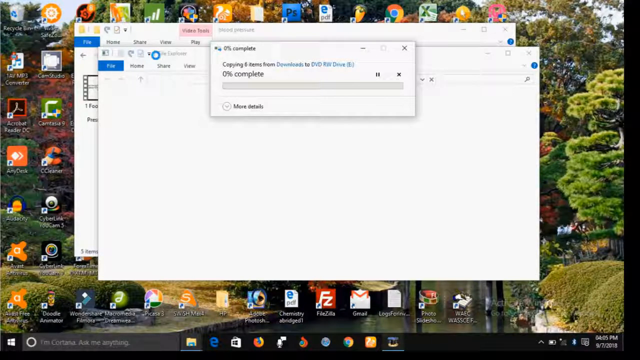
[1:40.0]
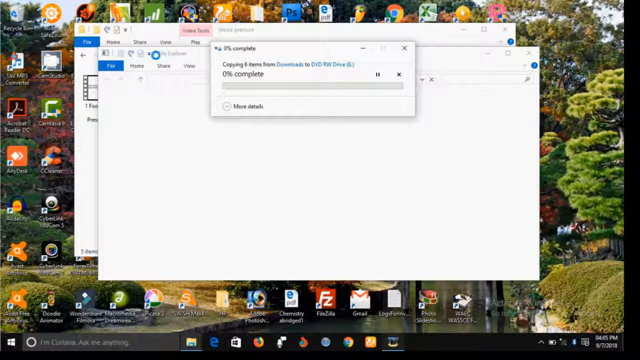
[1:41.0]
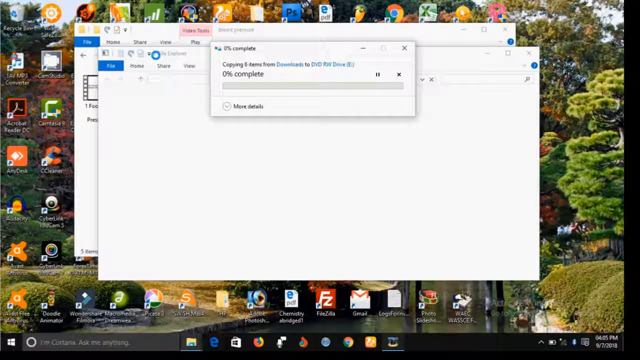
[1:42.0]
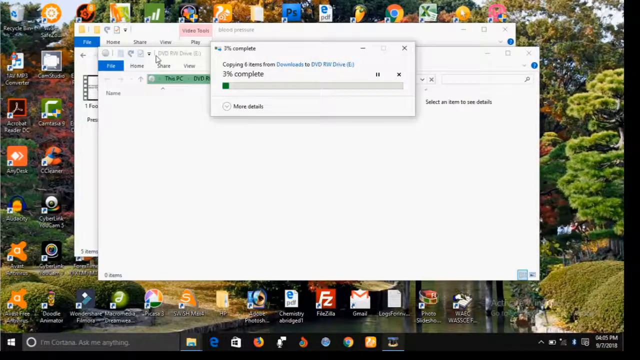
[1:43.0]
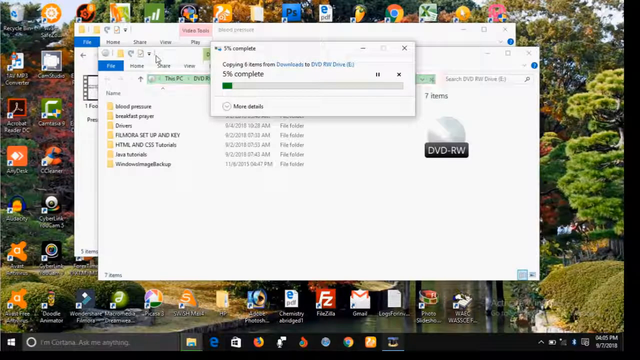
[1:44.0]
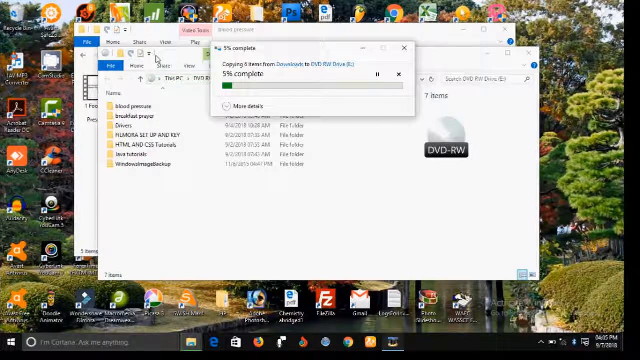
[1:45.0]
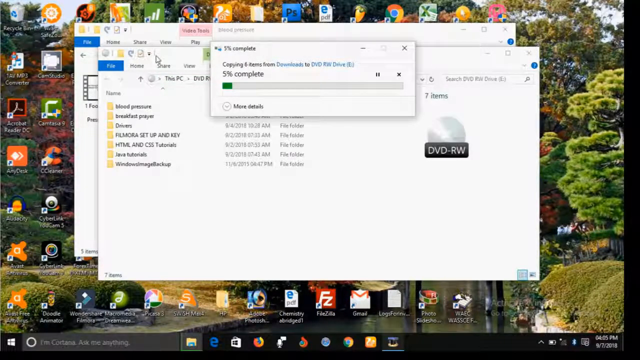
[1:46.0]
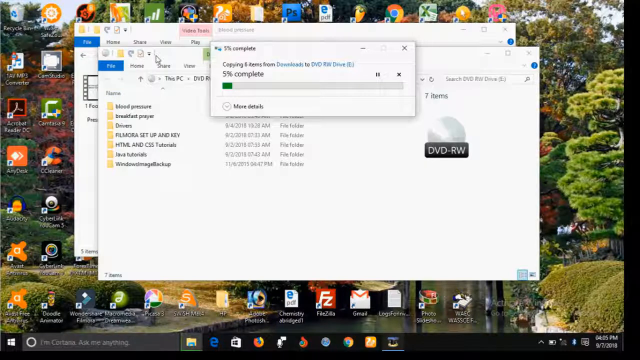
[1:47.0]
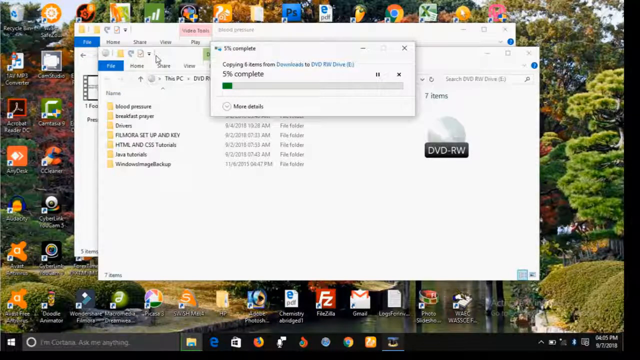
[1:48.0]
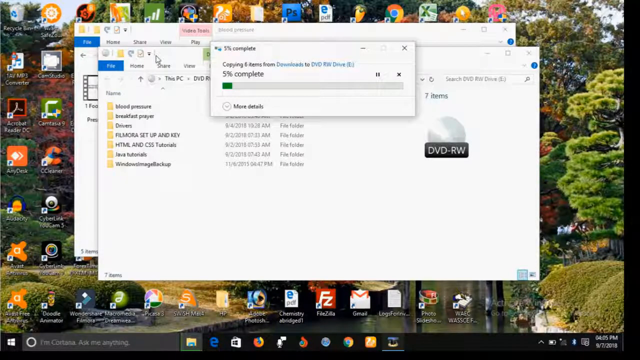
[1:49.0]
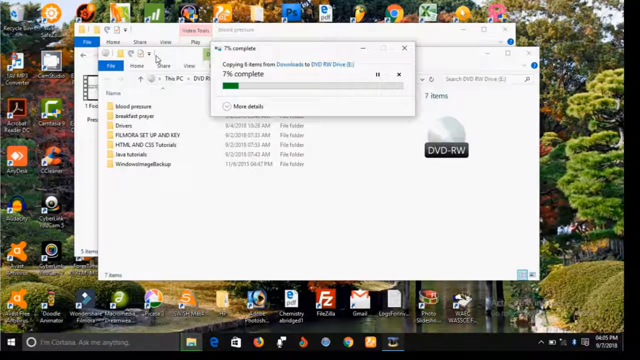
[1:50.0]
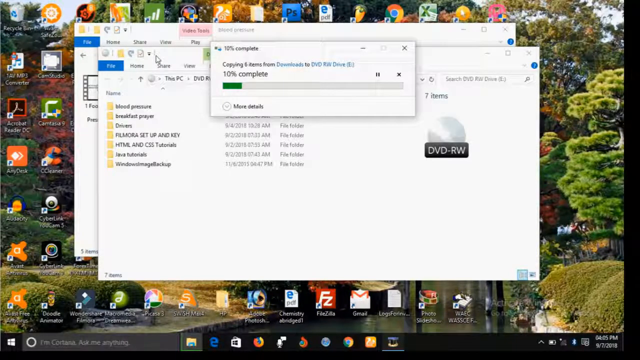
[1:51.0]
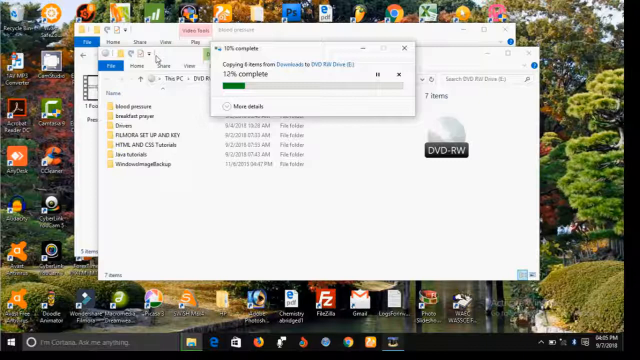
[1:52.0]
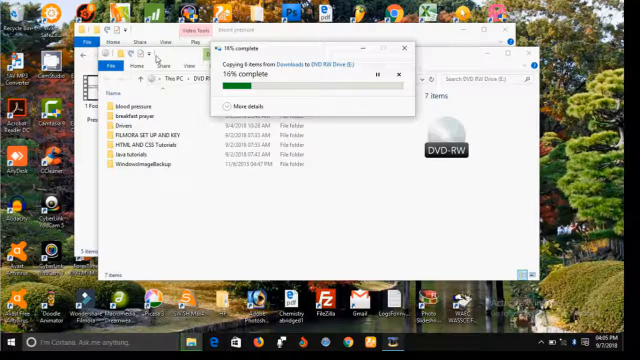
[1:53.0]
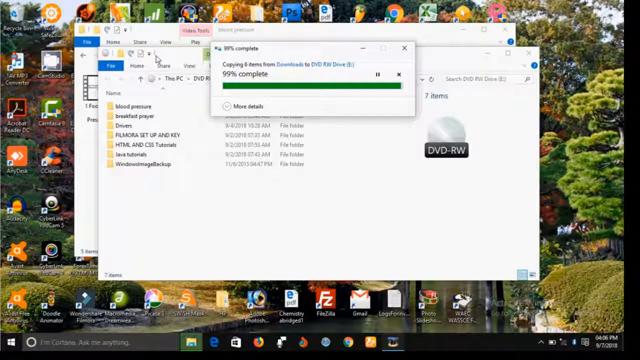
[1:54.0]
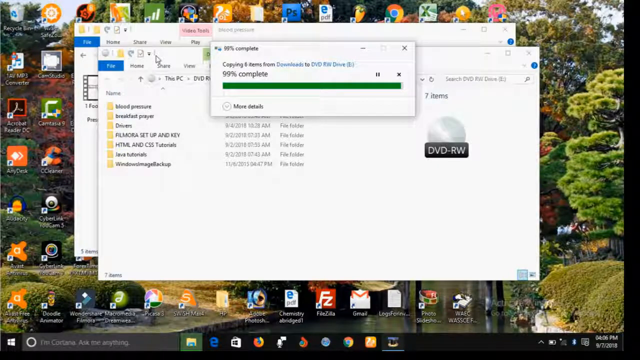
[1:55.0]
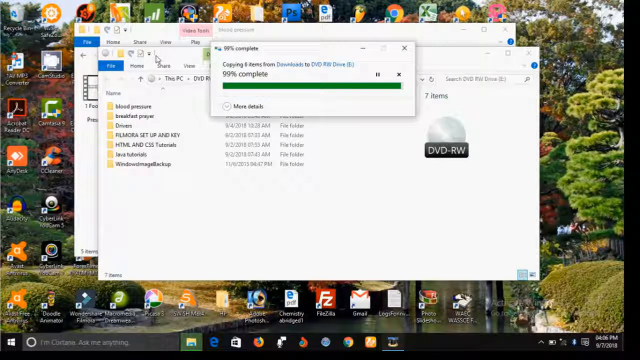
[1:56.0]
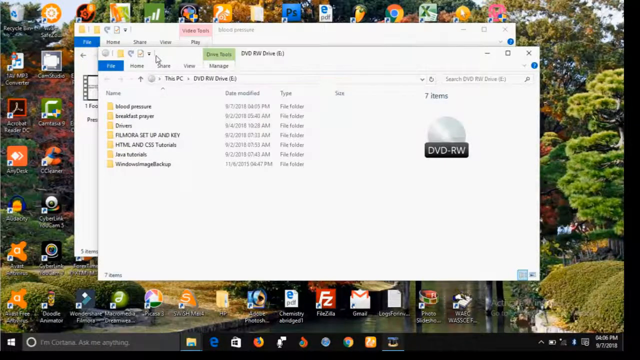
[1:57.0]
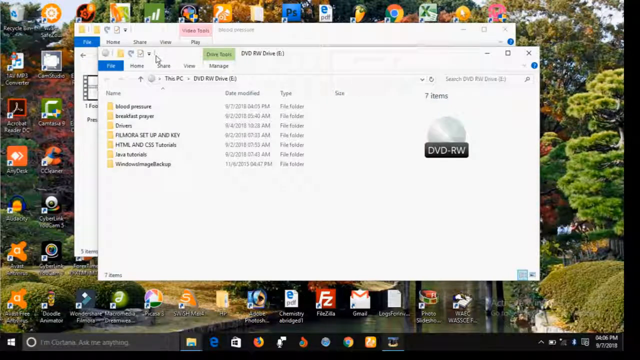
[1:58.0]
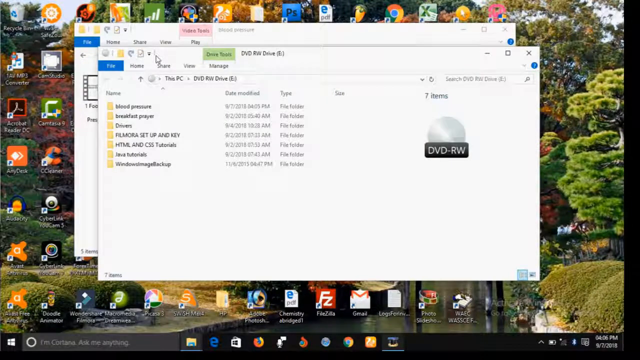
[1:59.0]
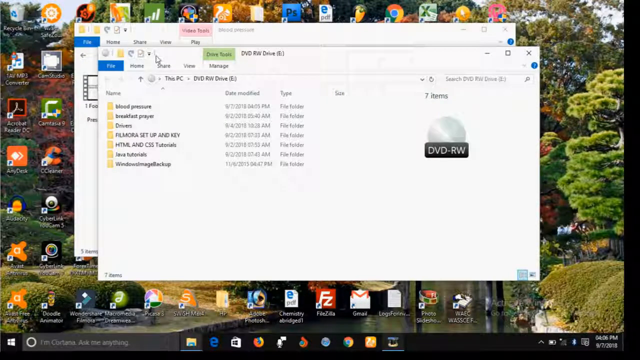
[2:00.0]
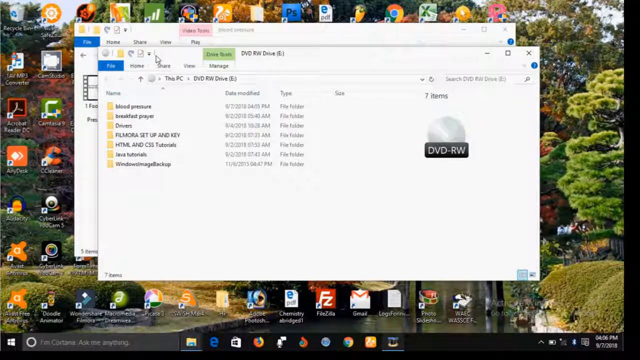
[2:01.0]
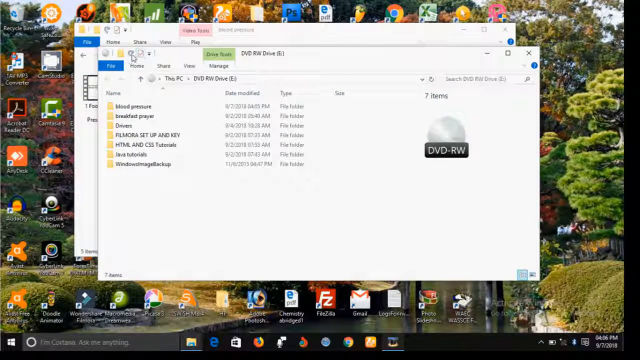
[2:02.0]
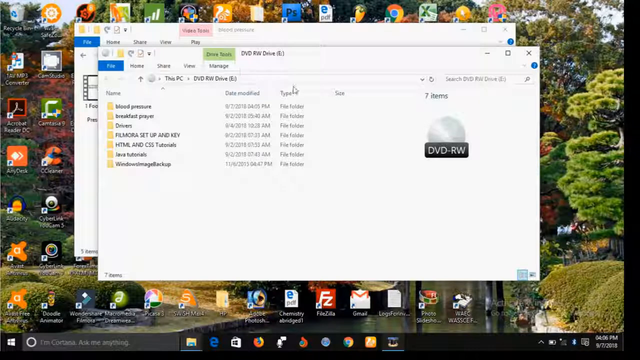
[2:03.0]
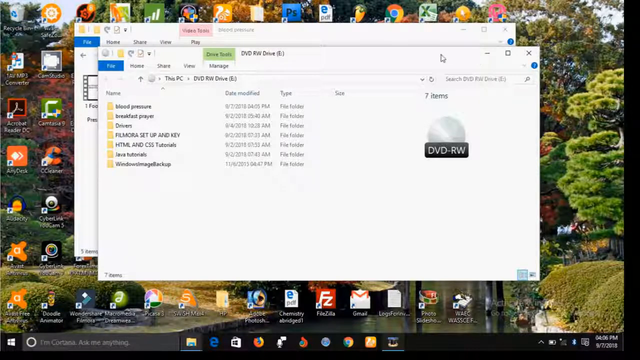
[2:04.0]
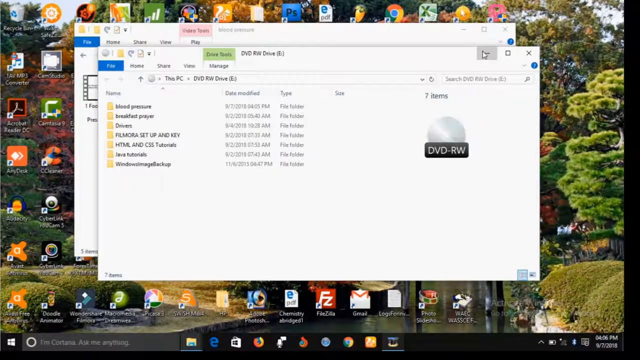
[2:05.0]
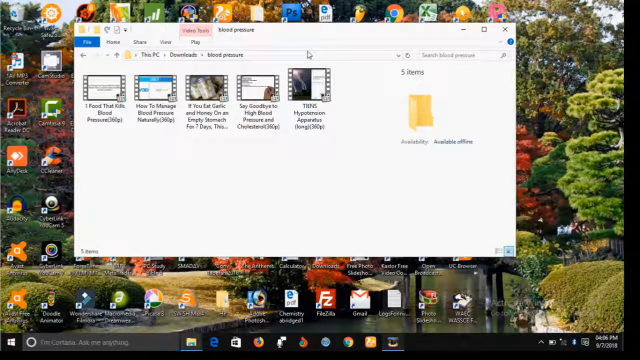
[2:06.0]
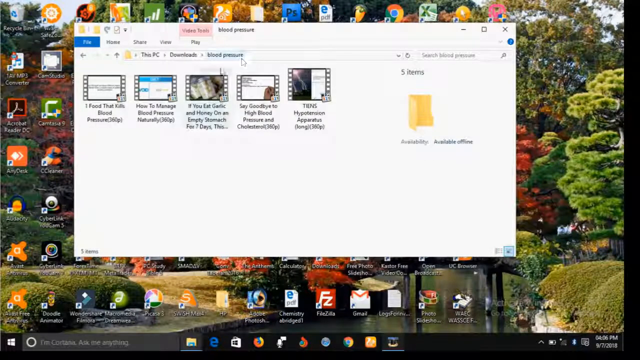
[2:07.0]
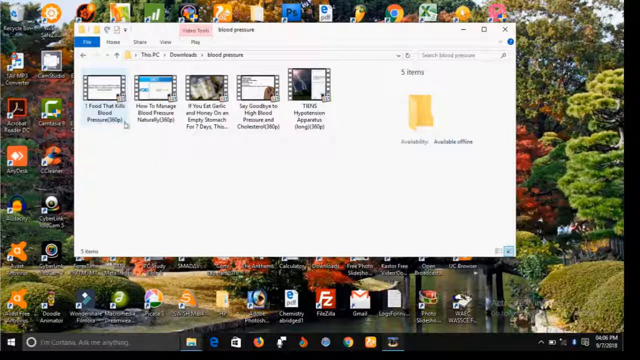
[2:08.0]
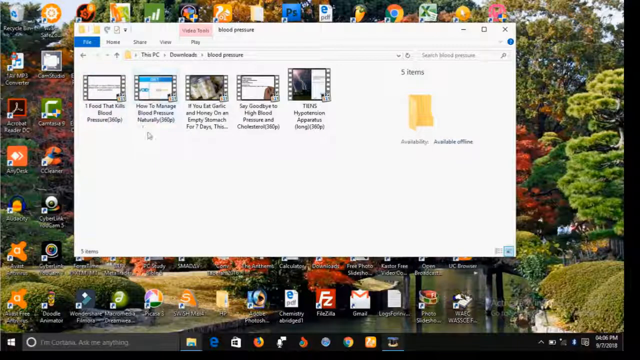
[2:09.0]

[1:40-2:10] The file continues loading and burning onto the disk. On the right side there is a DVD disk labelled "DVD RW". The progress increases and the file is burned onto the disk. A file path from the disk reads "this PC, DVD RW disk". The disk contains folders: blood pressure, breakfast prayer, drivers, HTML and CSS, Java, tutorials and Windows; there are seven folders, and the seventh is blurry. The user hovers, minimizes the disk directory and returns to the blood pressure directory on the PC, the blood pressure folder having been successfully burned onto the disk.